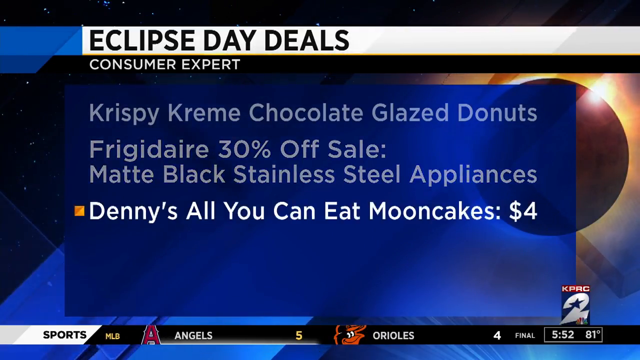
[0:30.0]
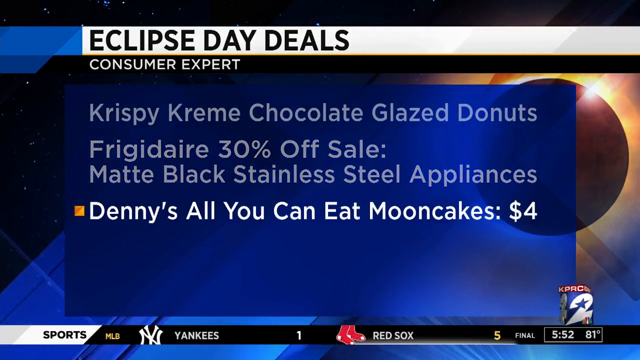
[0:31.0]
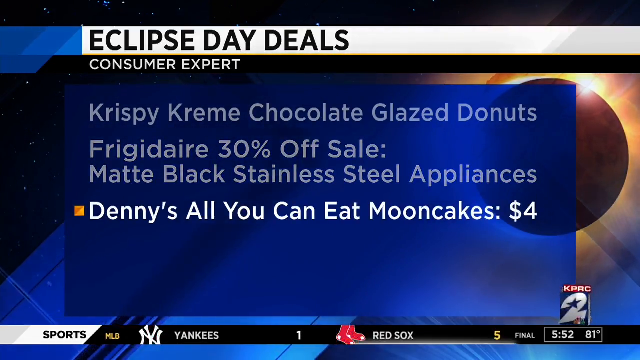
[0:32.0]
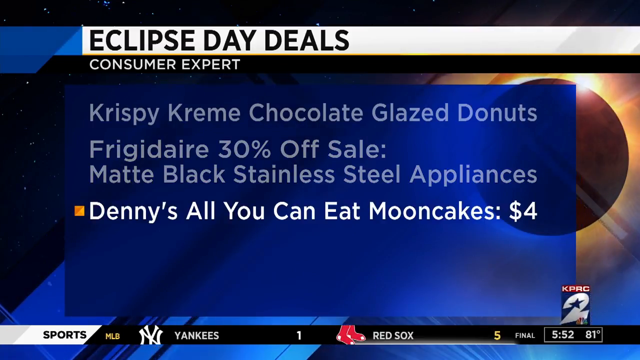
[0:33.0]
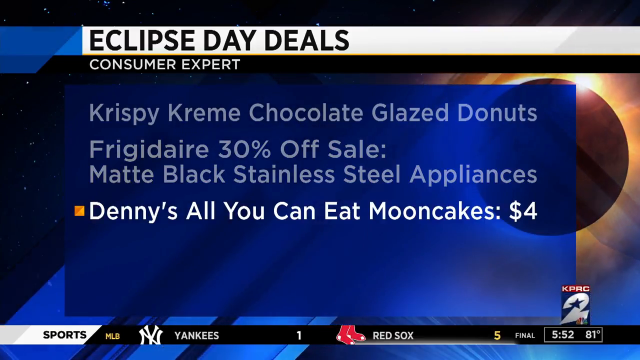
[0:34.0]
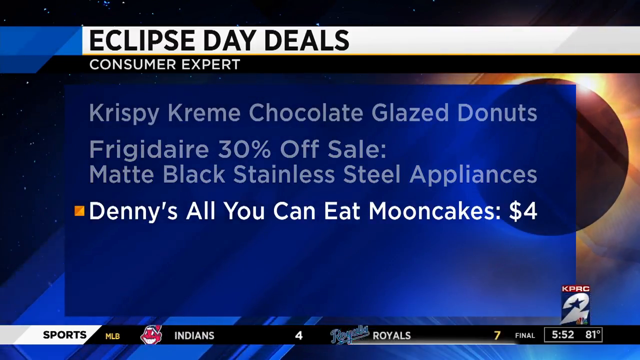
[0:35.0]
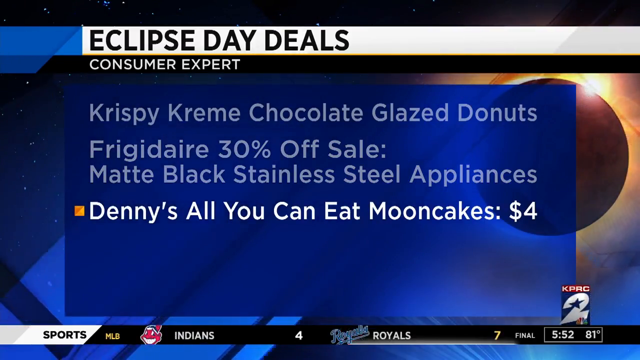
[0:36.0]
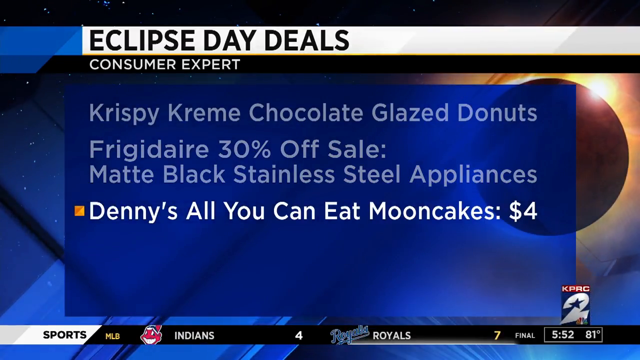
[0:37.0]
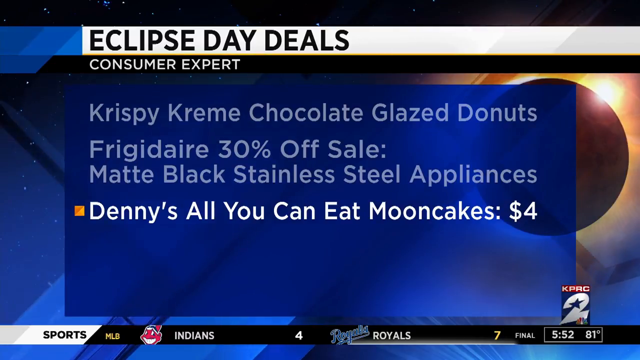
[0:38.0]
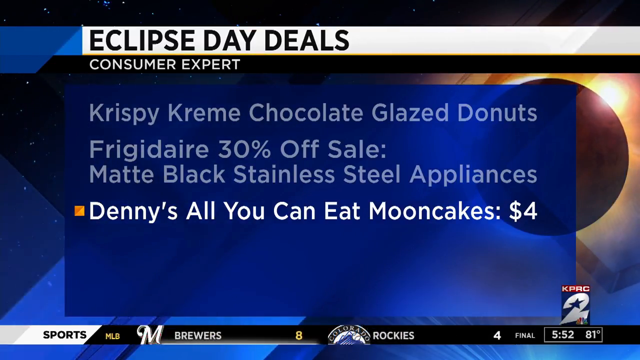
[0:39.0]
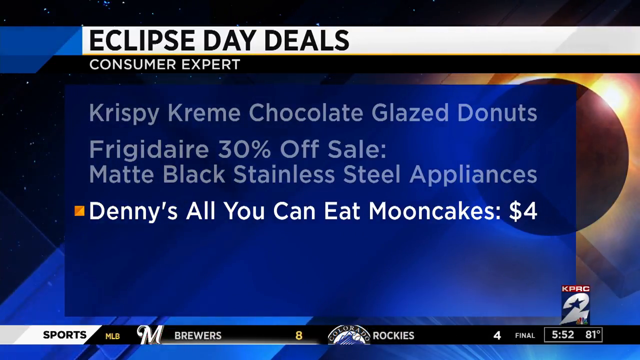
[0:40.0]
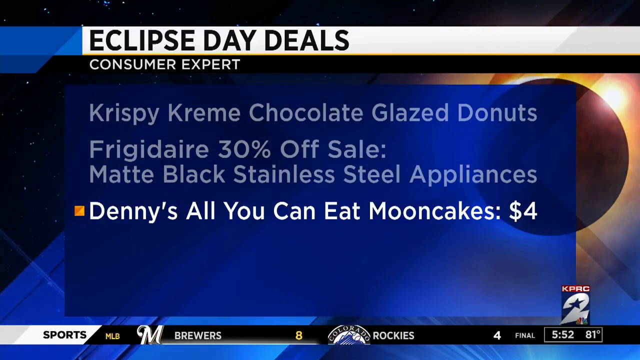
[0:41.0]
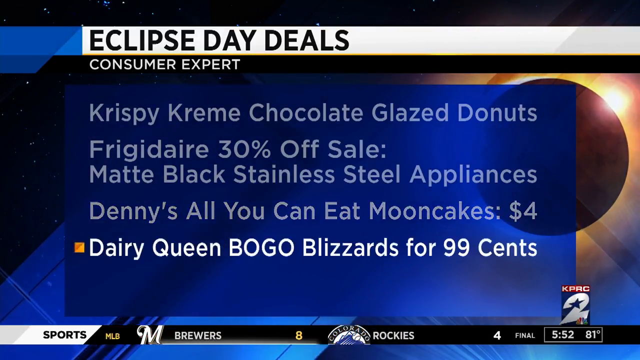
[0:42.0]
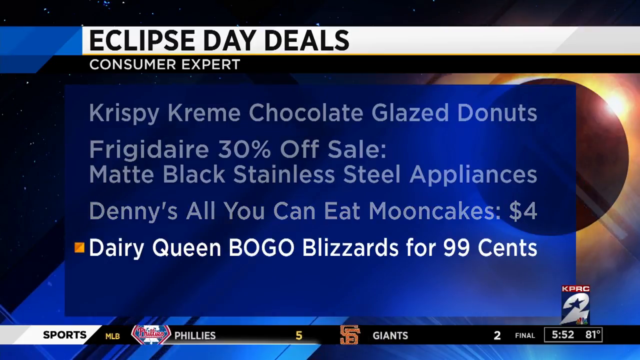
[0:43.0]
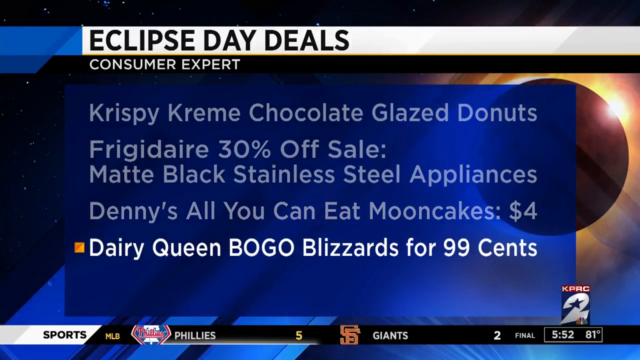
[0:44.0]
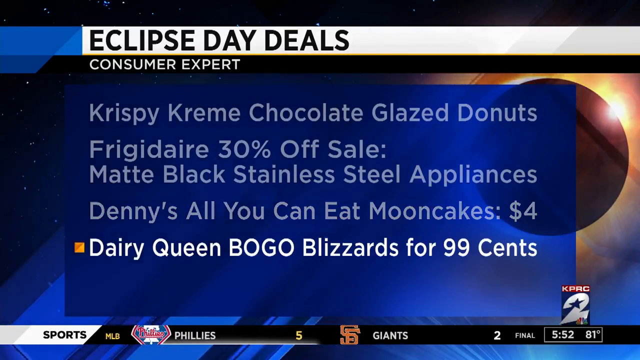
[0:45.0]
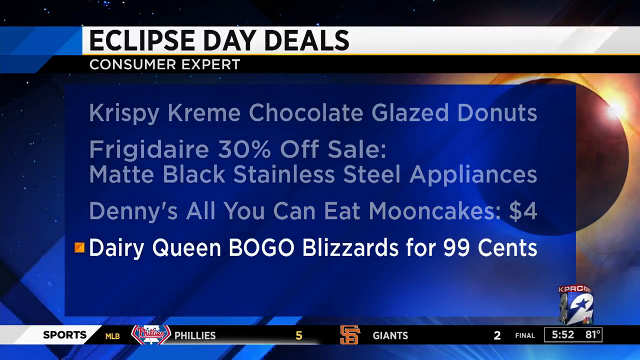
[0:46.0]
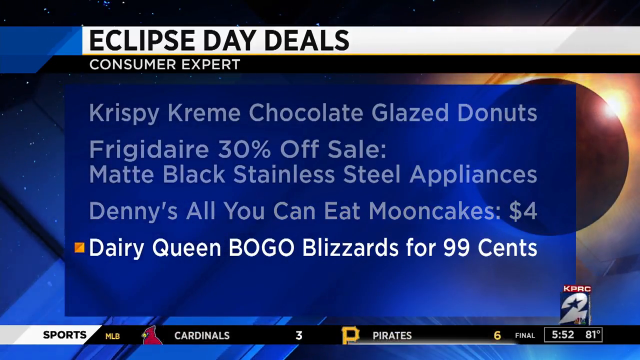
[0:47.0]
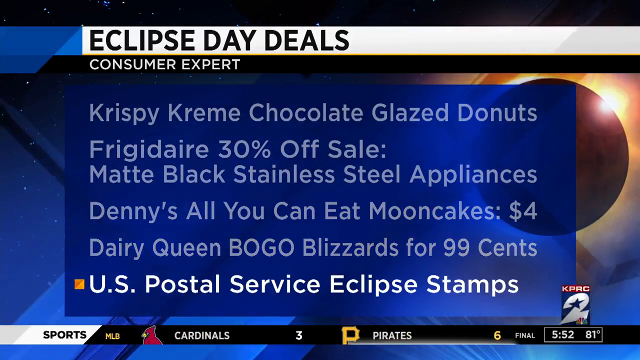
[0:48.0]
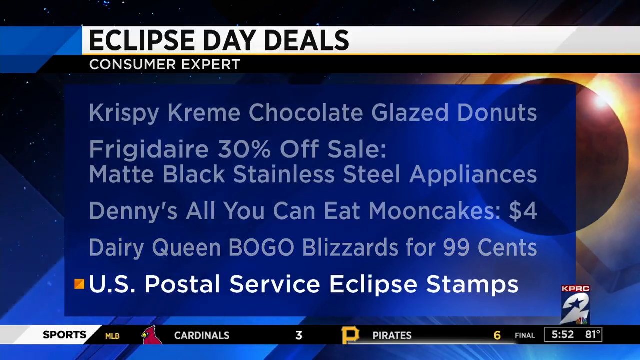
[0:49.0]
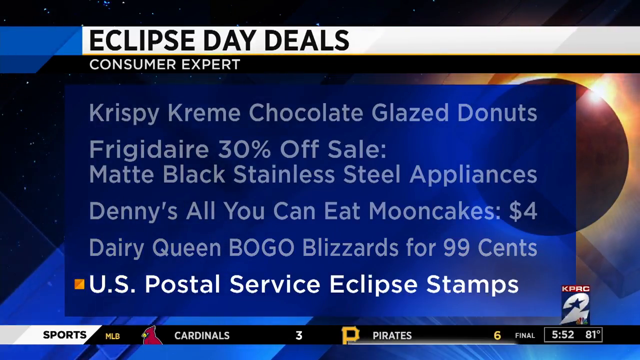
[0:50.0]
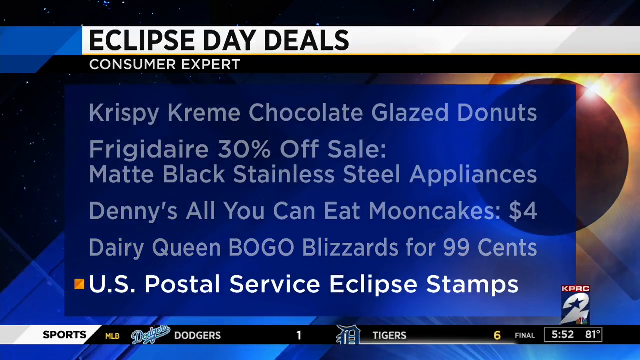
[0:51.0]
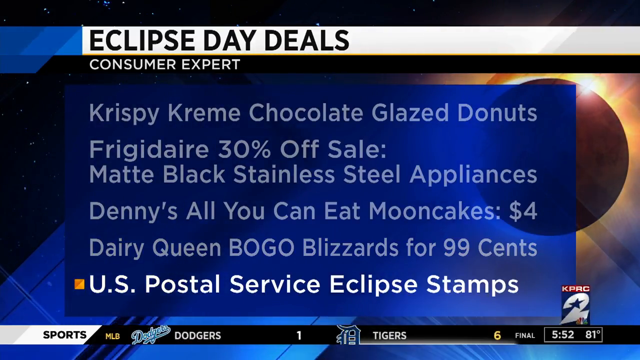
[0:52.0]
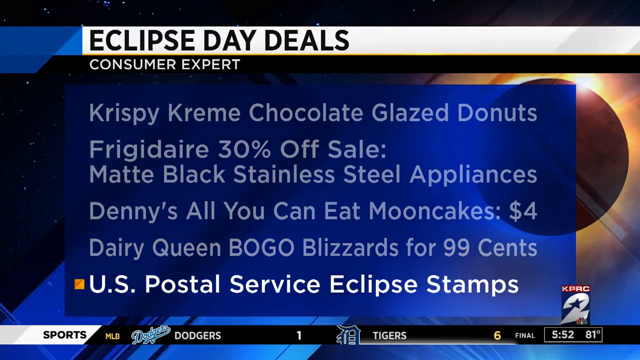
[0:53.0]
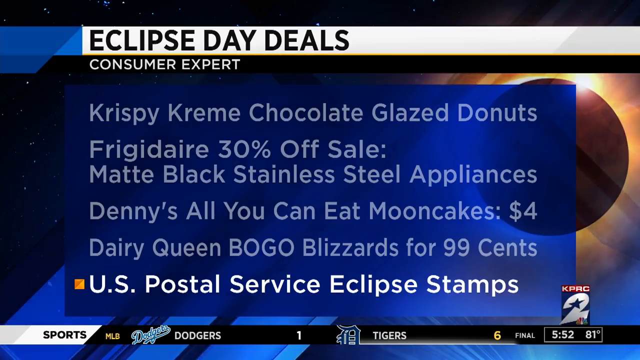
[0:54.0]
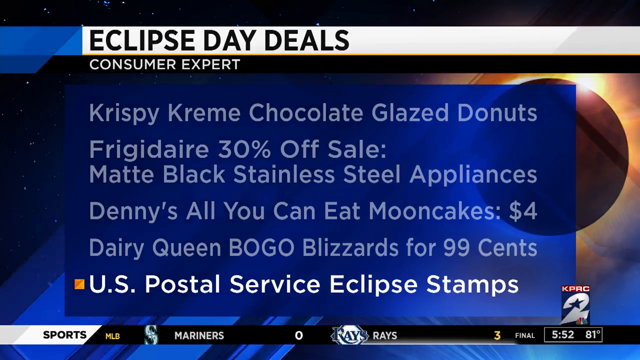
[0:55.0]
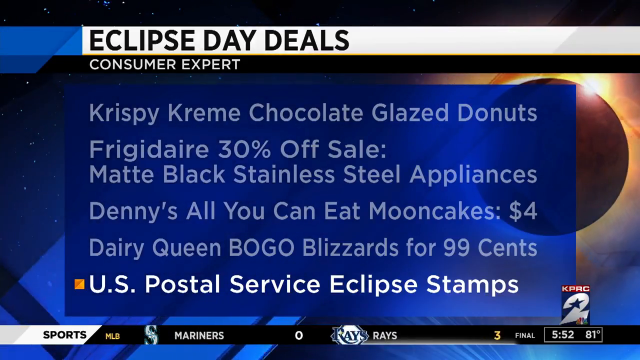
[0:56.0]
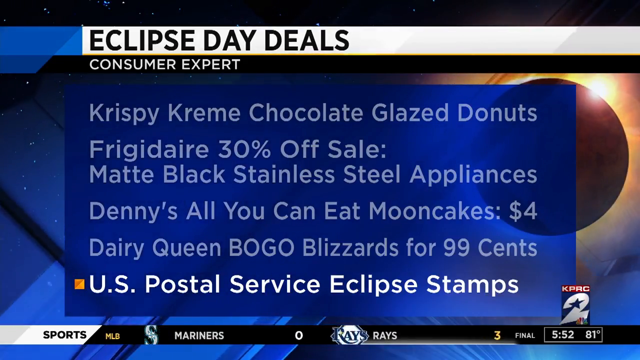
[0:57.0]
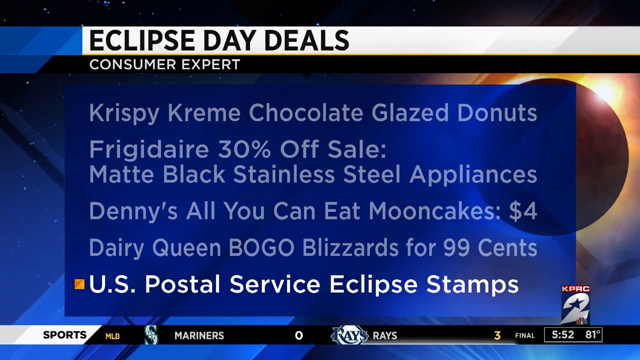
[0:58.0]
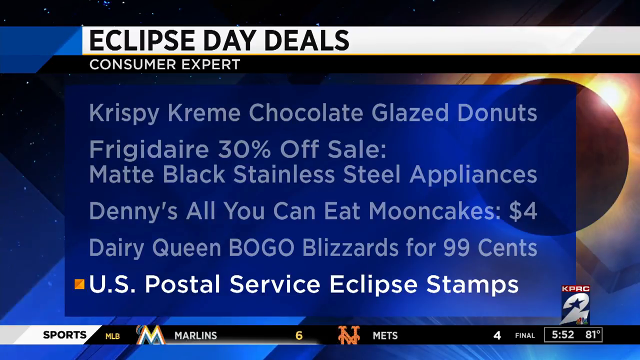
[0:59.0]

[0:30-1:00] In white on the screen is "Eclipse Day Deals" from a consumer expert, followed by a list of items. The first is Krispy Kreme chocolate glazed donuts, in blue; the second is a Frigidaire 30% off sale on matte black stainless steel appliances; the third is Denny's all-you-can-eat mooncakes for $4; the fourth is Dairy Queen burger blizzards for $0.99; and the fifth is U.S. Postal Service Eclipse Stamps. Along the bottom of the screen are baseball results, including Yankees 1, Red Sox 5, Indians 4, Royals 7, Brewers 8, Phillies 5, Giants 2, Cardinals 3, Pirates 6, Dodgers 1, Tigers 6 and Marlins 6. The screen also shows KPRC channel 2 at 5:52 and 81 degrees outside.